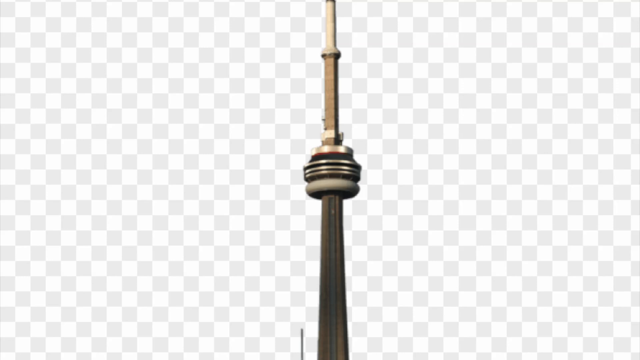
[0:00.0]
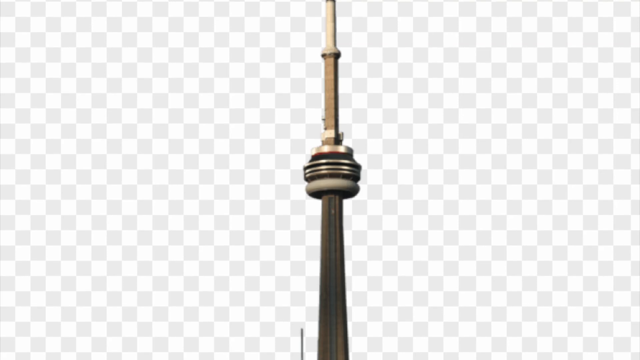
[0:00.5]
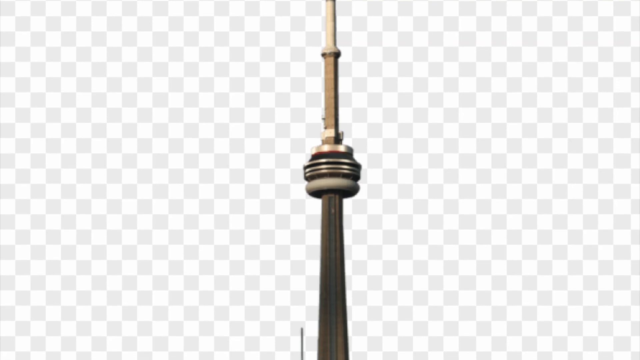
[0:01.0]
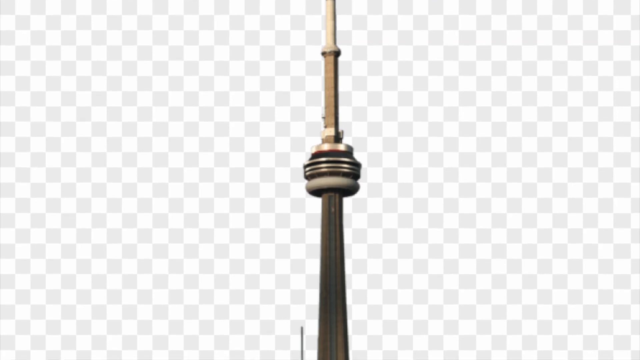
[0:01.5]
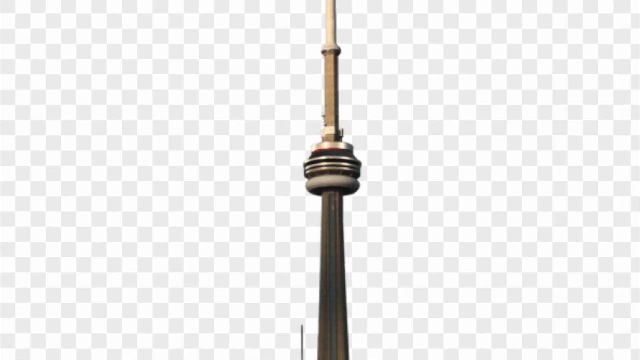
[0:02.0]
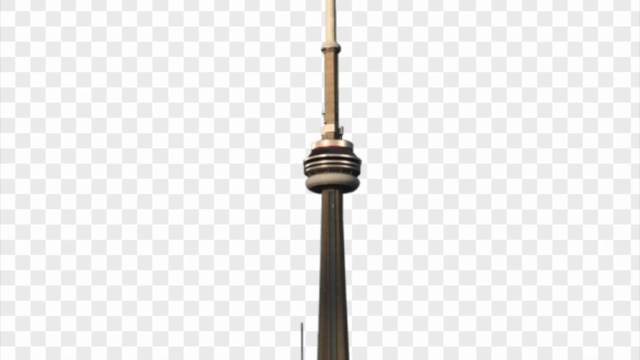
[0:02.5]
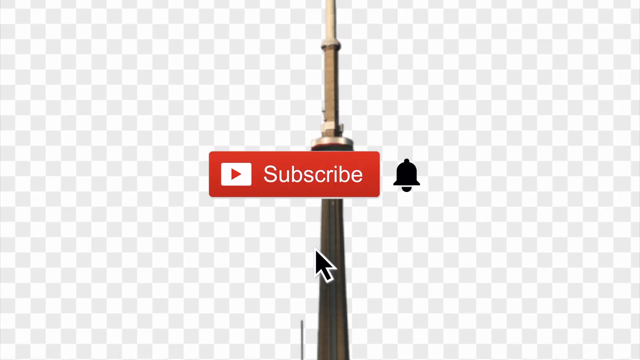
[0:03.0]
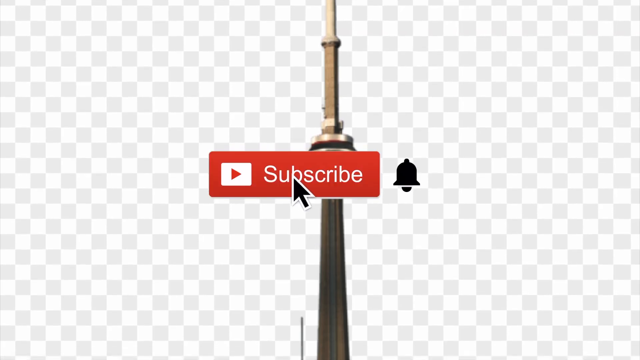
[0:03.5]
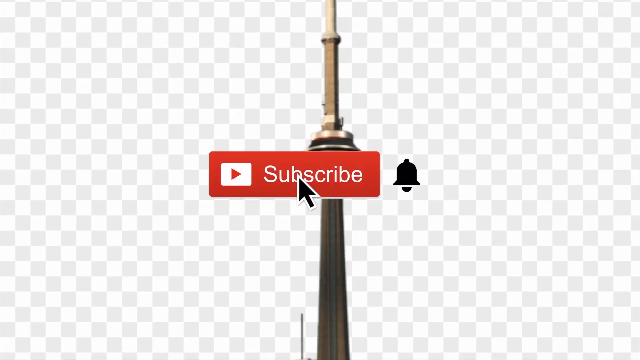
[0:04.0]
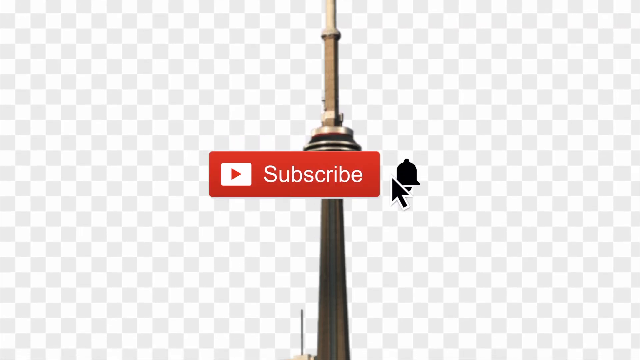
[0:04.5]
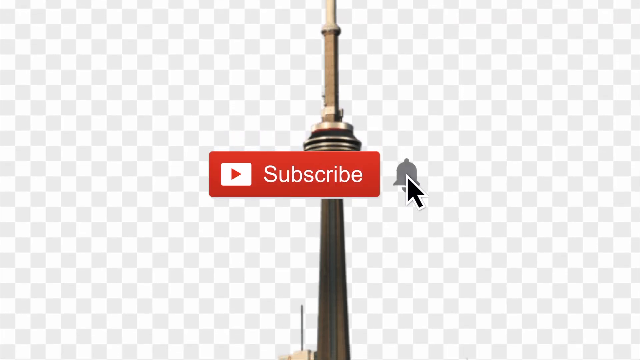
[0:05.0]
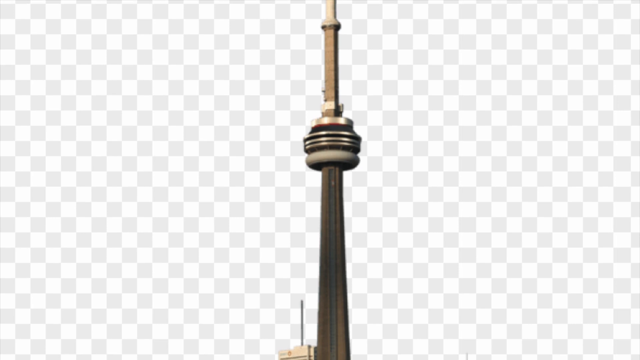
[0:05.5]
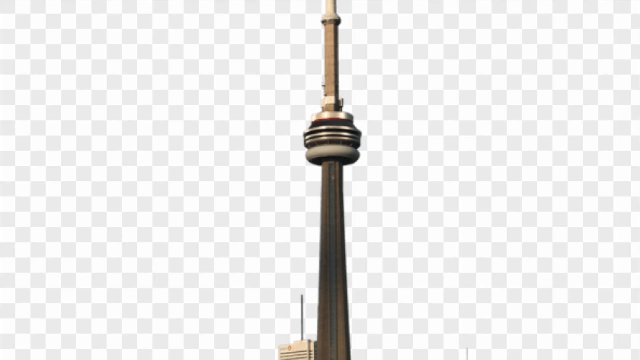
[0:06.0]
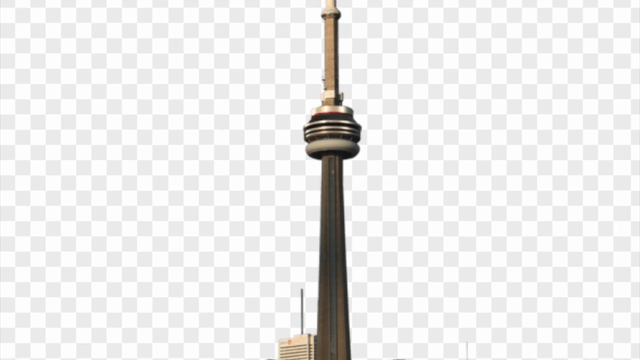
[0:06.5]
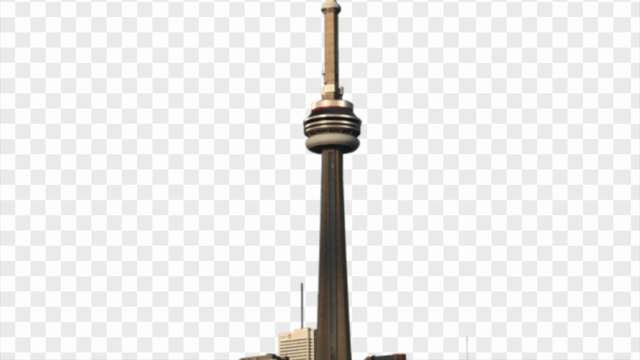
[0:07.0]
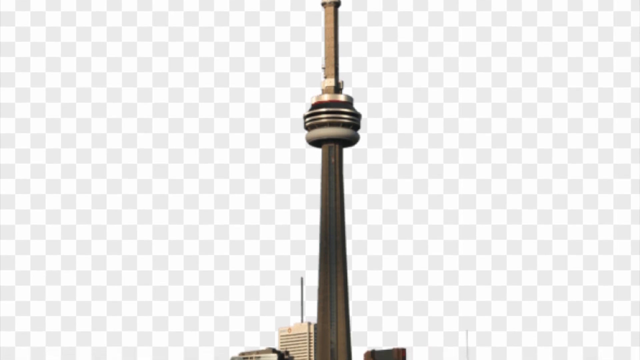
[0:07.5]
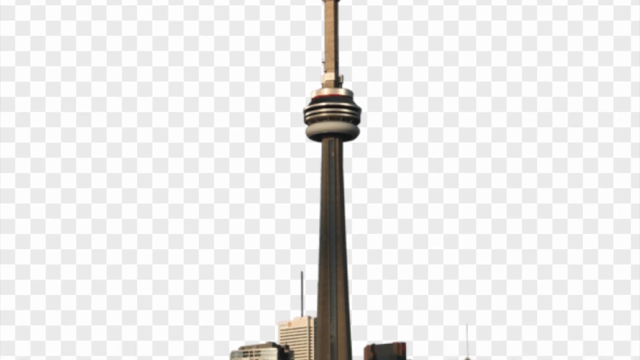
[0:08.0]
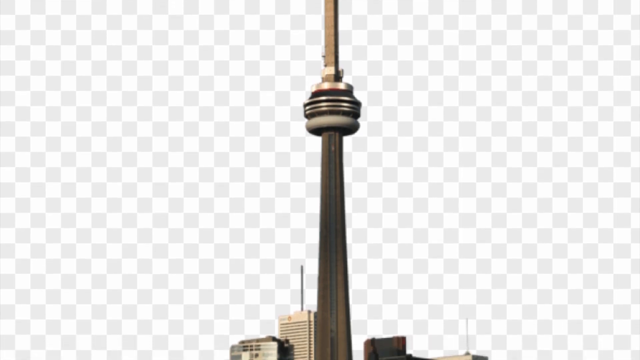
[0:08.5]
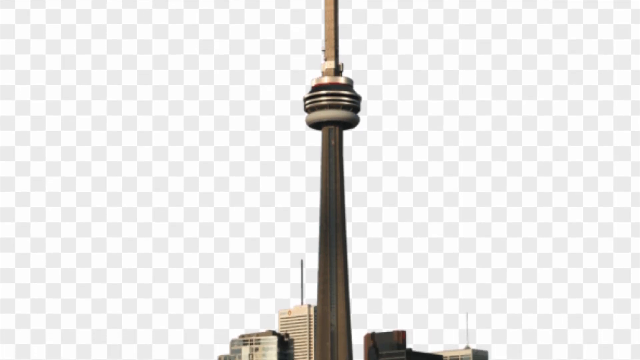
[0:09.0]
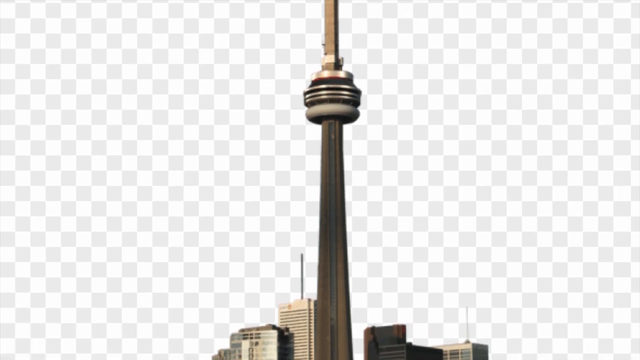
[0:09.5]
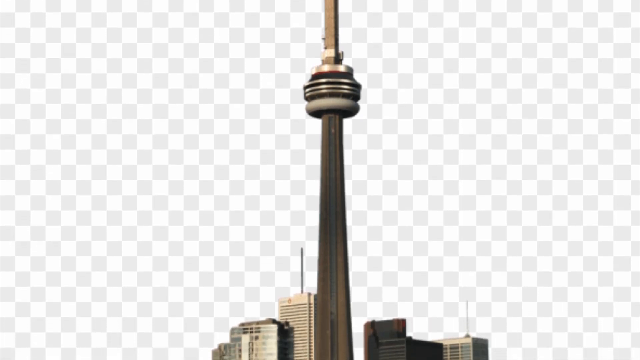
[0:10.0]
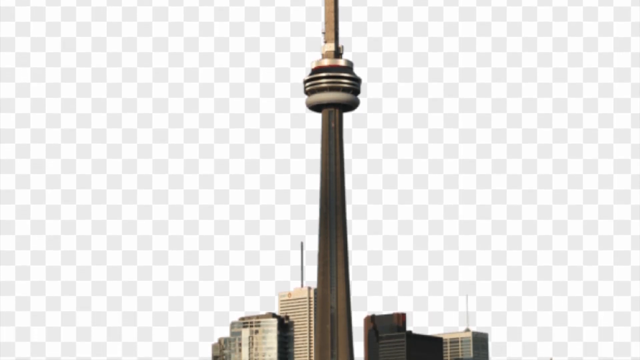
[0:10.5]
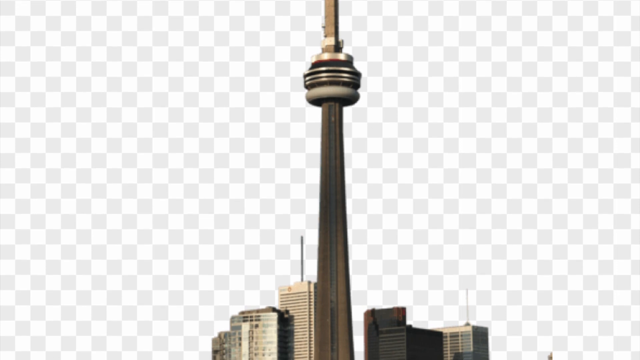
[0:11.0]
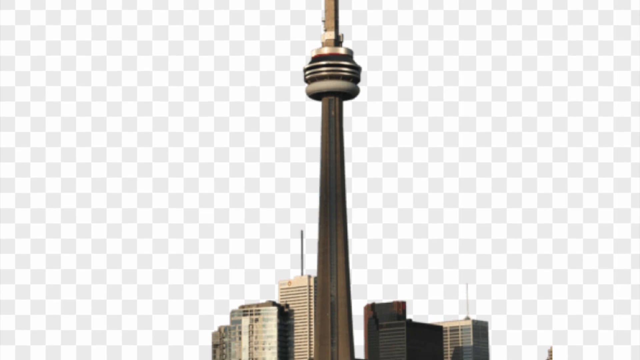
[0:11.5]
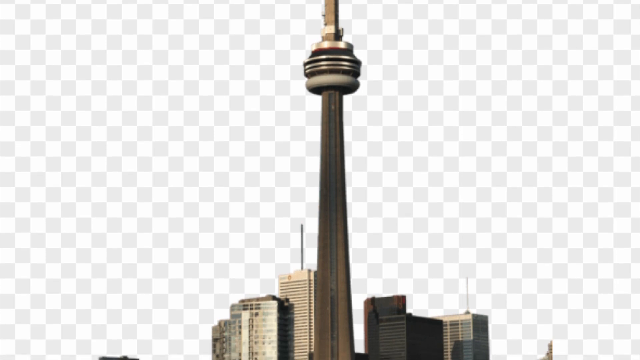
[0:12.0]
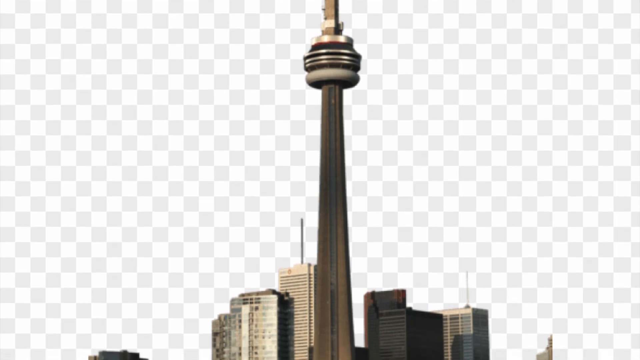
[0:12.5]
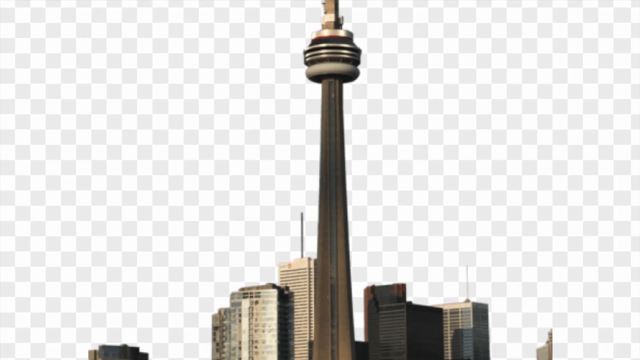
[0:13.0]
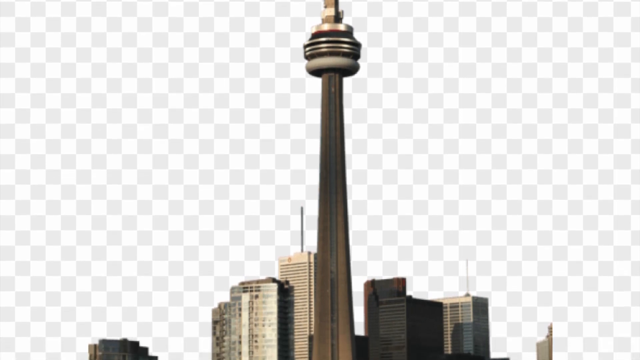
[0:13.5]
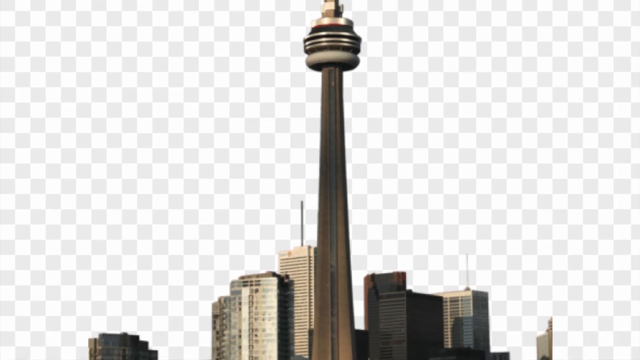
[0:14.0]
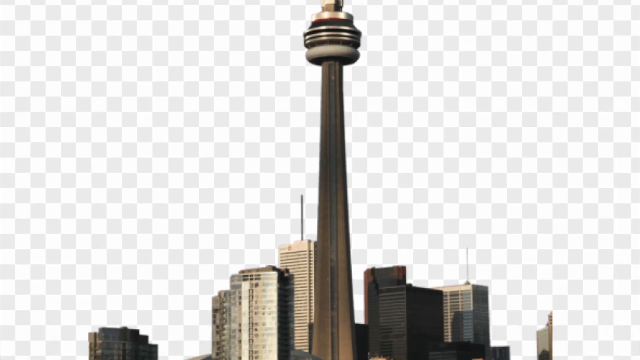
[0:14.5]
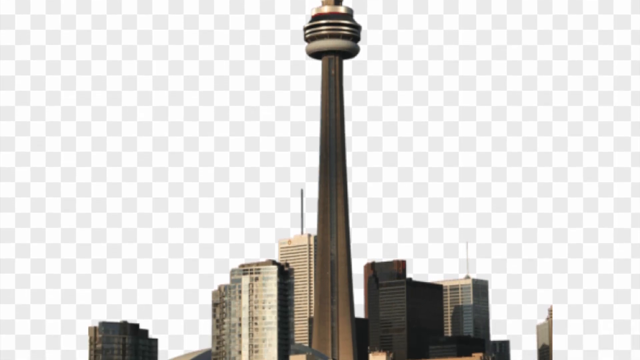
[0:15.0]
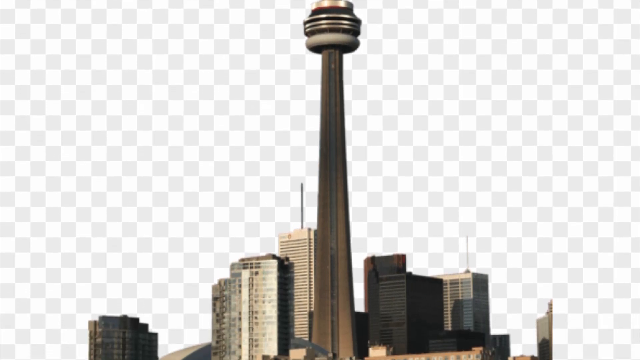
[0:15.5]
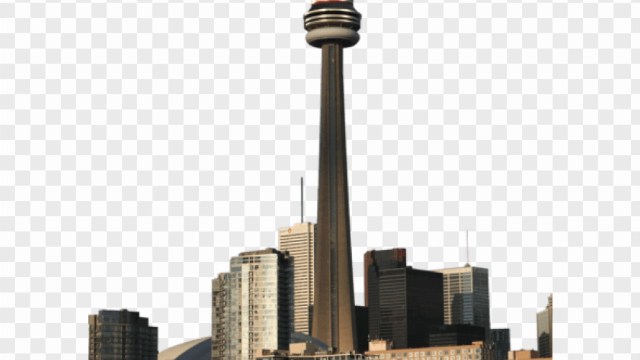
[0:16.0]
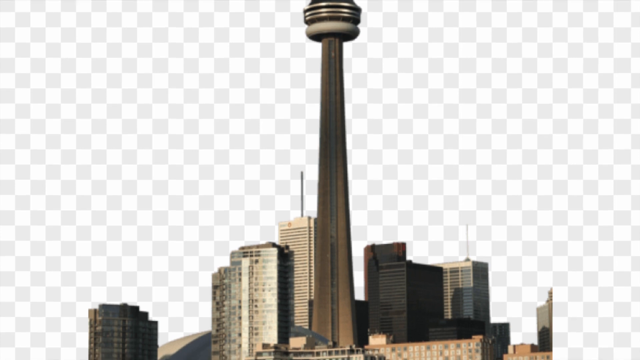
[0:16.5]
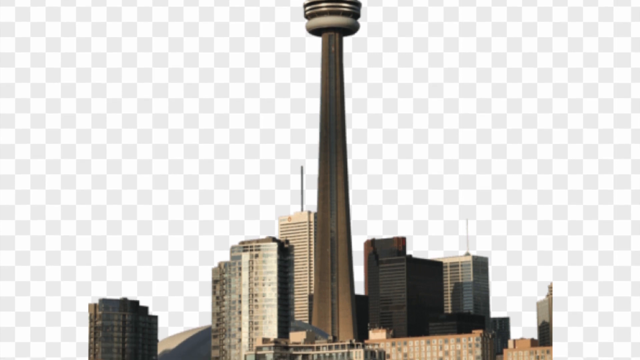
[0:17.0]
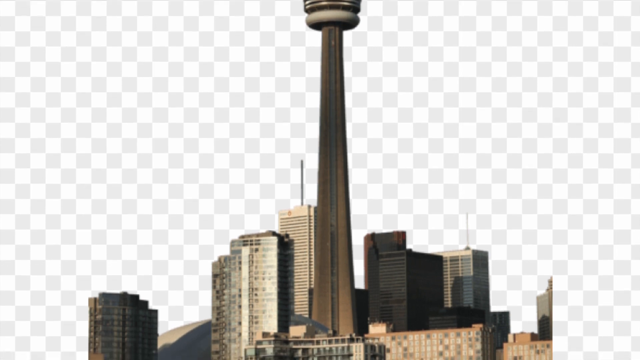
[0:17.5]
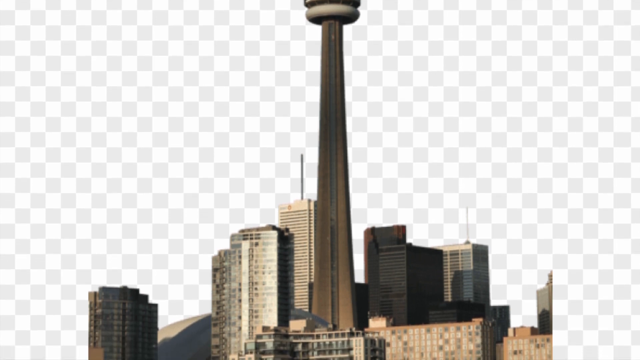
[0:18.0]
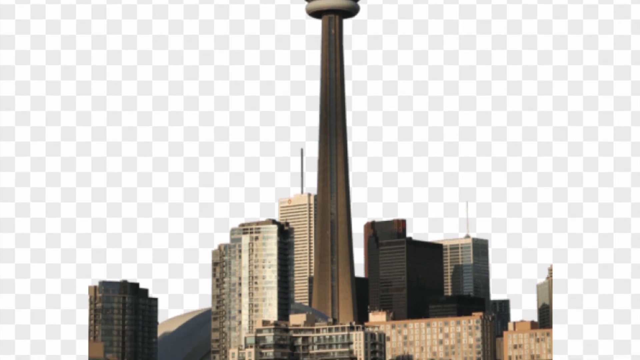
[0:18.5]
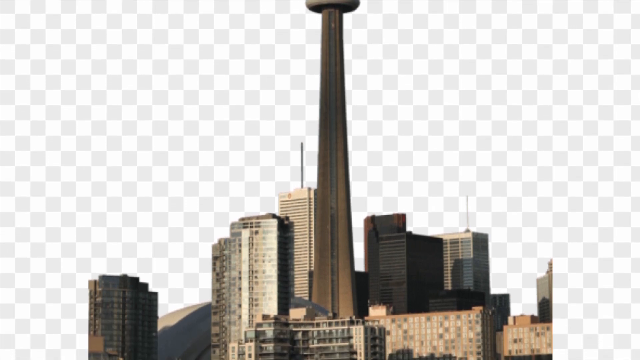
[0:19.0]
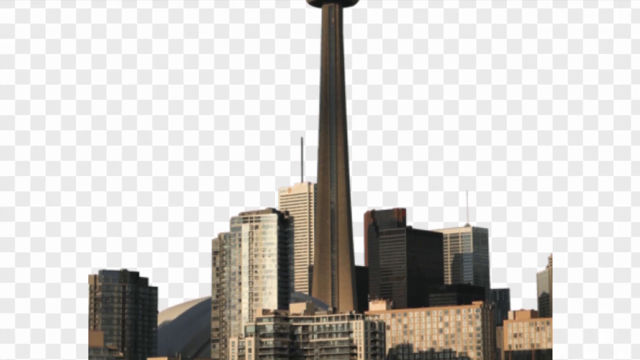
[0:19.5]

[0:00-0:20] A thin tower stands in the middle of the screen against a white background, with a checkered pattern at the bottom of the screen. A red button pops up with white text reading "subscribe" and the YouTube logo in it, and a black mouse cursor is over the subscribe button. A black bell is to the right of the box; the mouse moves from the middle of the logo to the right and clicks on the bell. The camera pans down from the top of the tower to reveal other cityscape buildings below; the tower is very tall. The buildings are clustered together in close proximity and are of varying heights. They differ in colour and shape: several are white or grey, a couple are red and black, and there is blue, brown and grey among them. Most are full of windows, seemingly numbering in the hundreds at a glance.